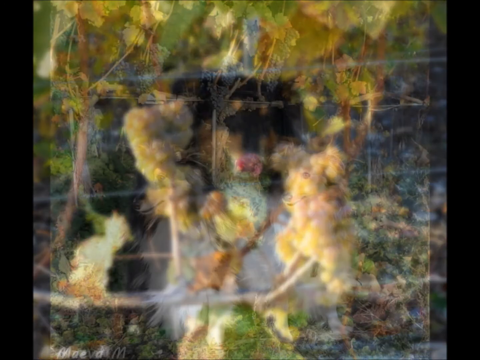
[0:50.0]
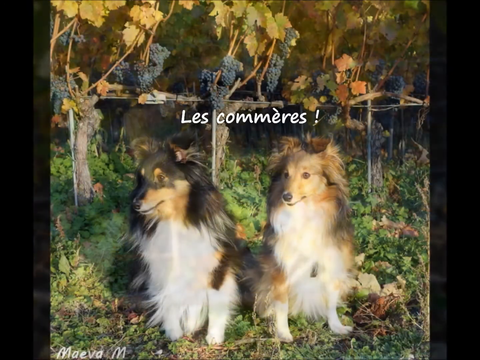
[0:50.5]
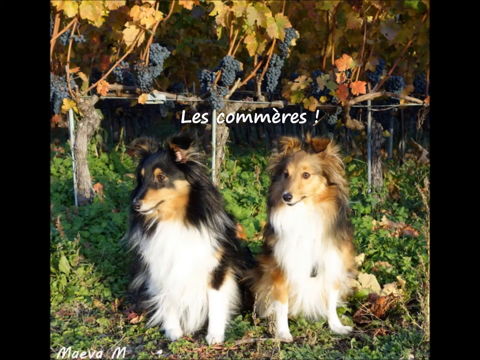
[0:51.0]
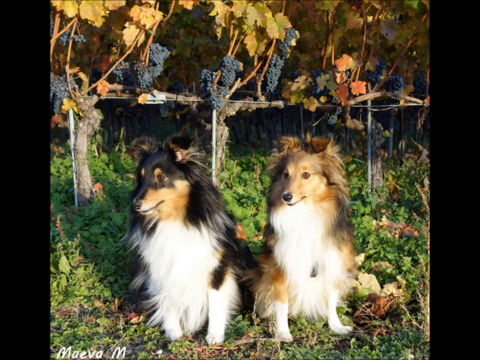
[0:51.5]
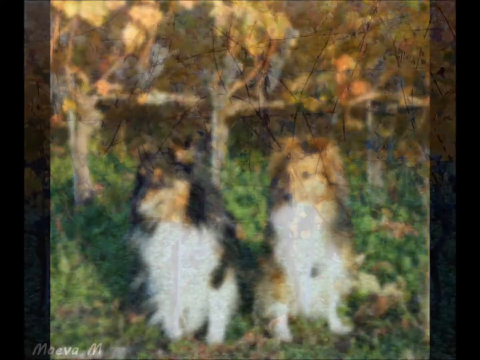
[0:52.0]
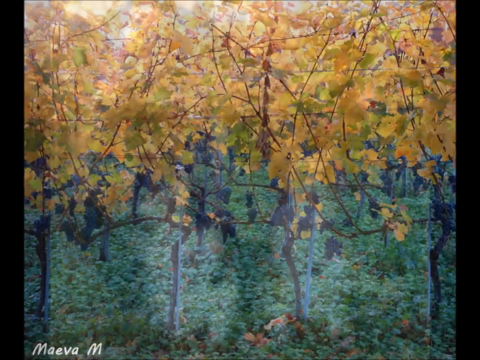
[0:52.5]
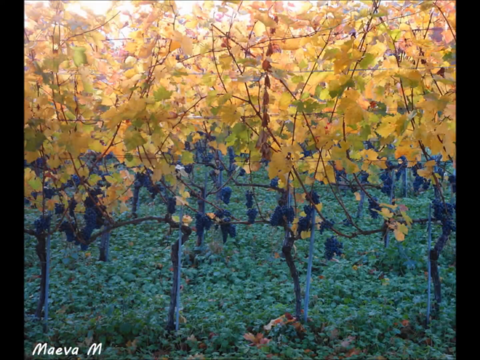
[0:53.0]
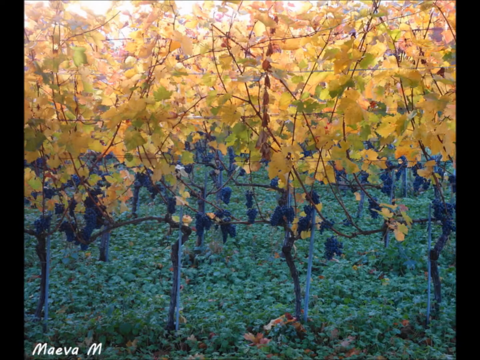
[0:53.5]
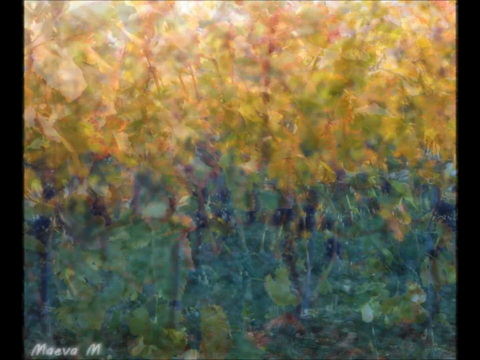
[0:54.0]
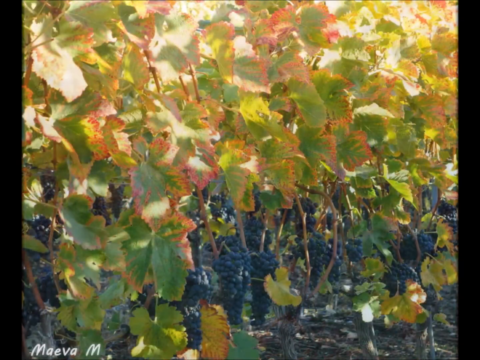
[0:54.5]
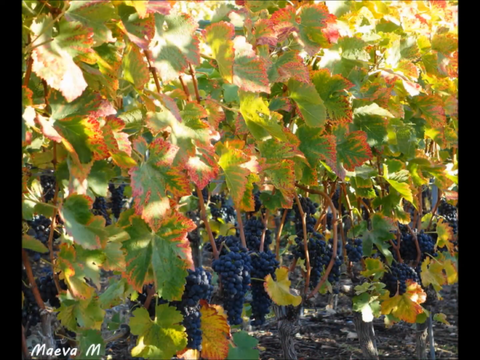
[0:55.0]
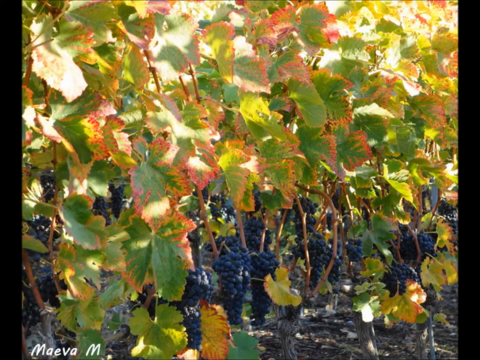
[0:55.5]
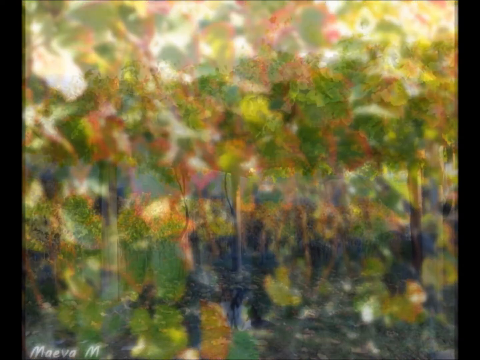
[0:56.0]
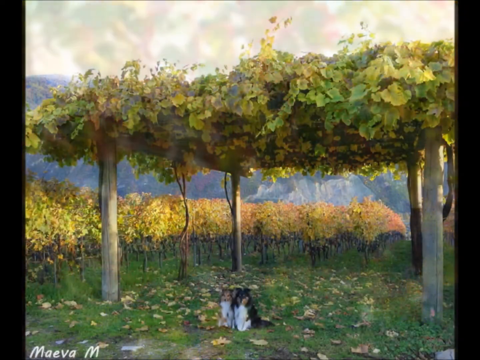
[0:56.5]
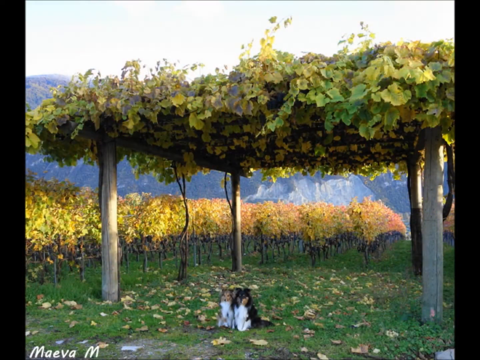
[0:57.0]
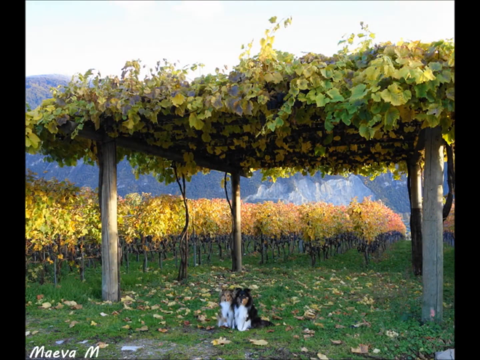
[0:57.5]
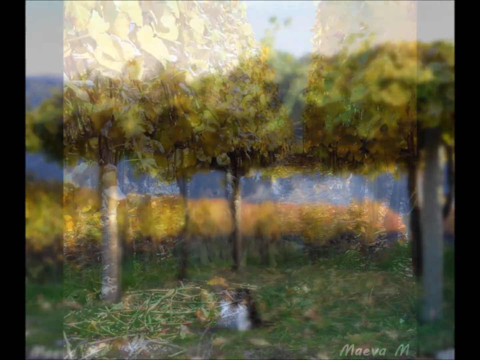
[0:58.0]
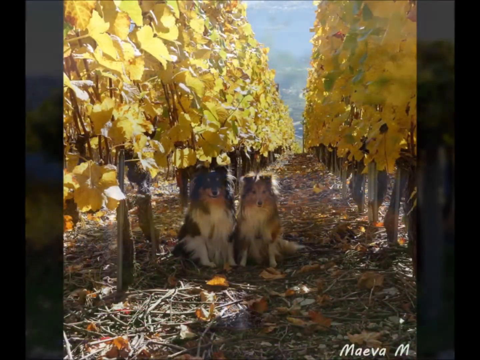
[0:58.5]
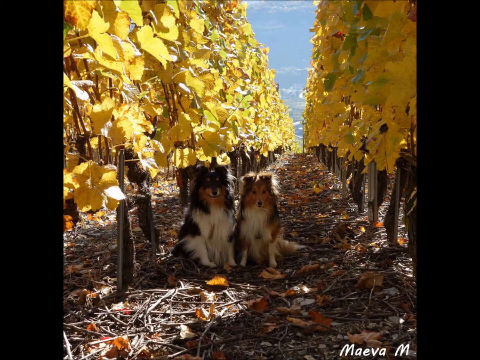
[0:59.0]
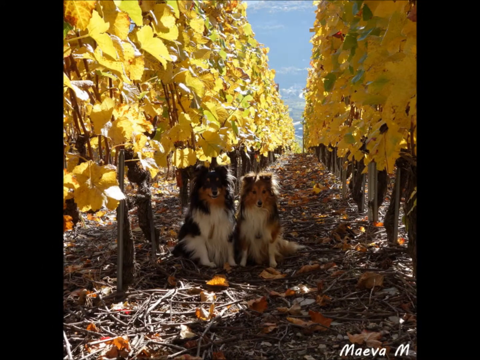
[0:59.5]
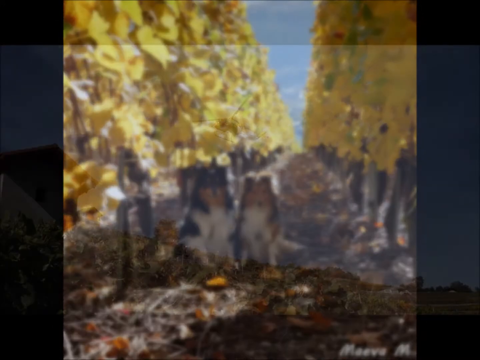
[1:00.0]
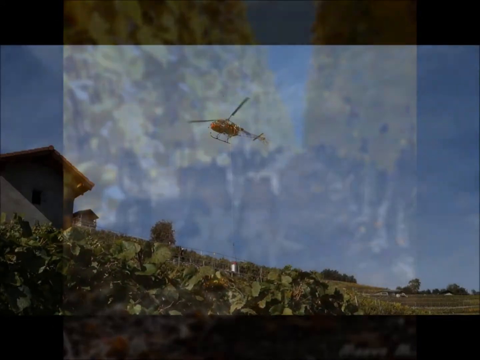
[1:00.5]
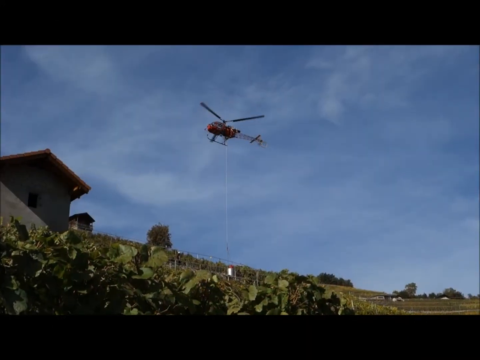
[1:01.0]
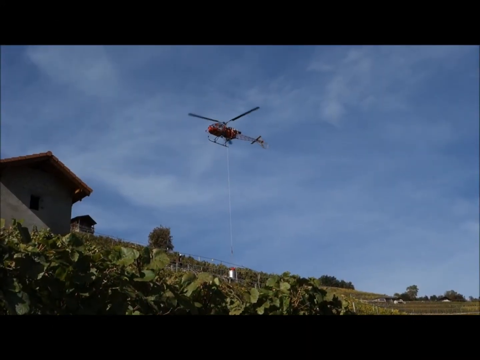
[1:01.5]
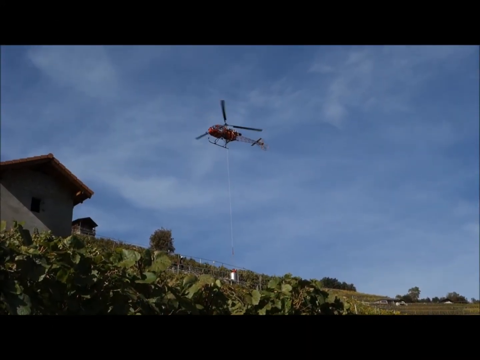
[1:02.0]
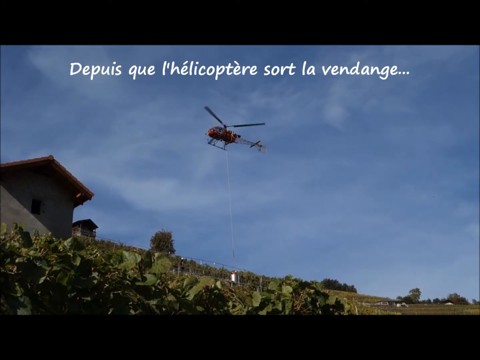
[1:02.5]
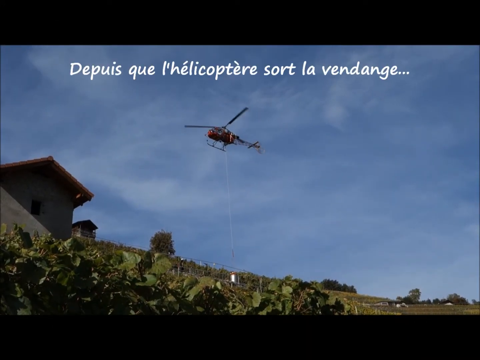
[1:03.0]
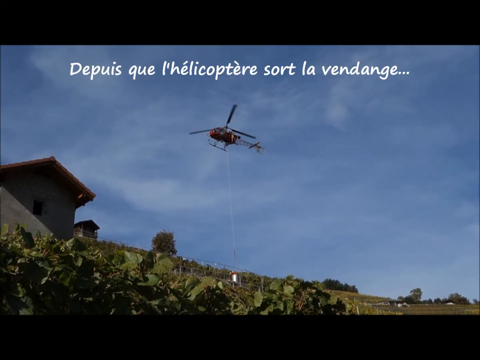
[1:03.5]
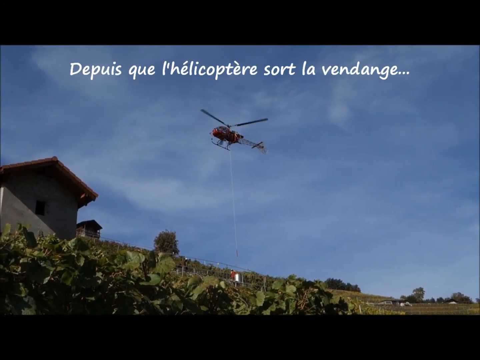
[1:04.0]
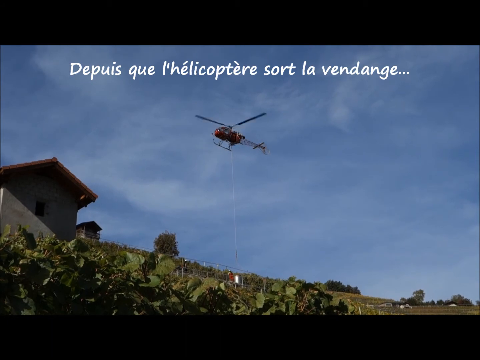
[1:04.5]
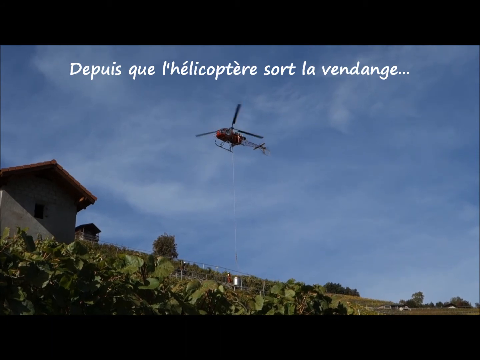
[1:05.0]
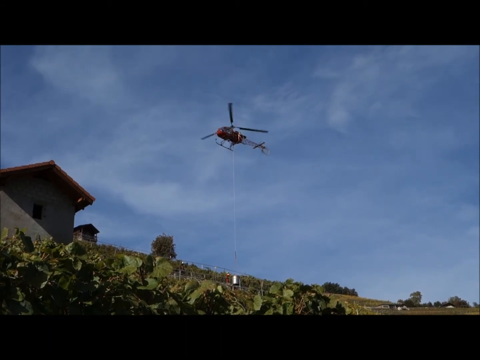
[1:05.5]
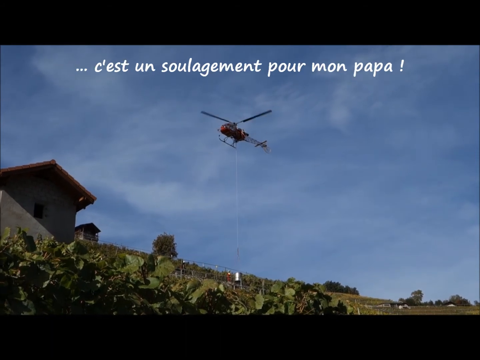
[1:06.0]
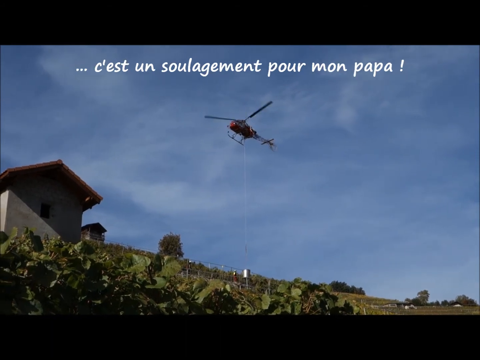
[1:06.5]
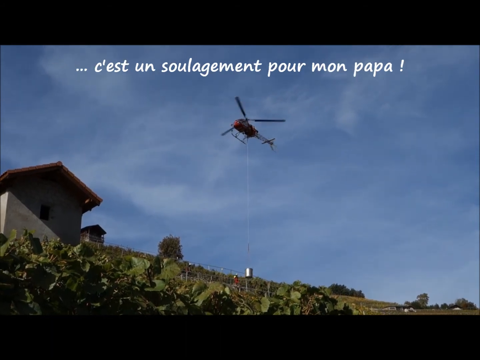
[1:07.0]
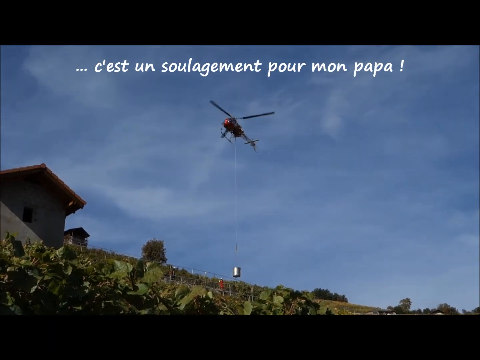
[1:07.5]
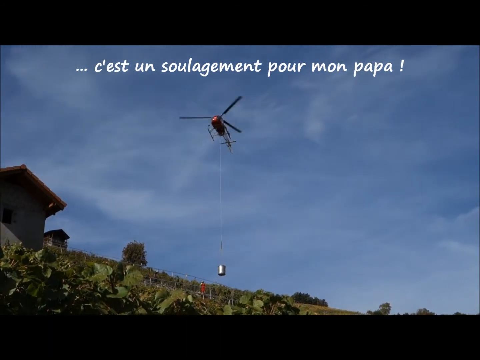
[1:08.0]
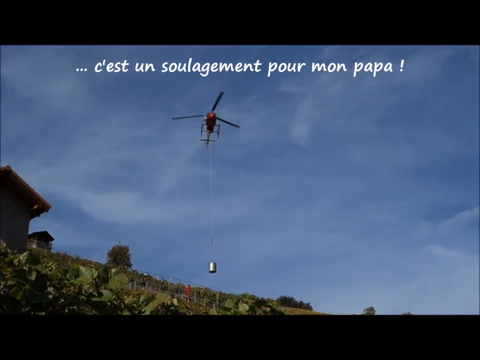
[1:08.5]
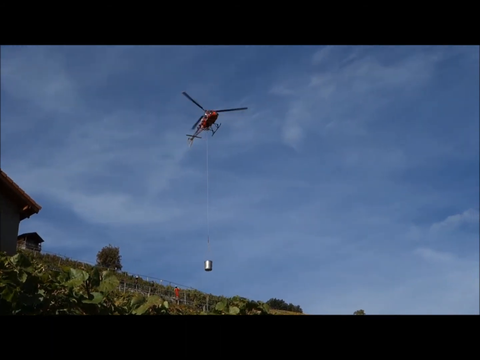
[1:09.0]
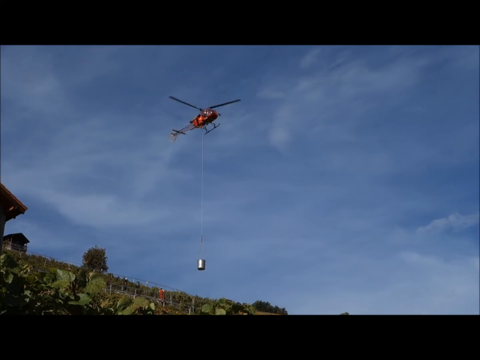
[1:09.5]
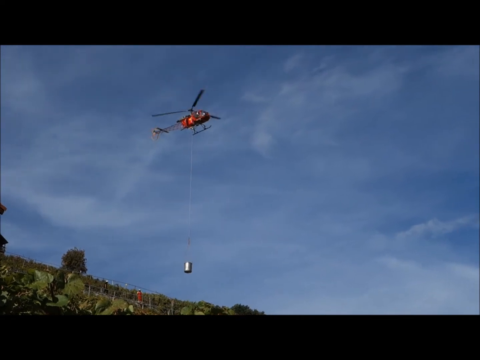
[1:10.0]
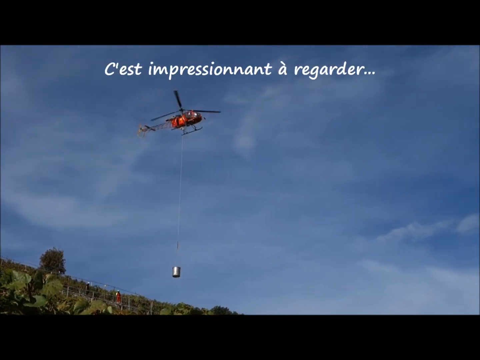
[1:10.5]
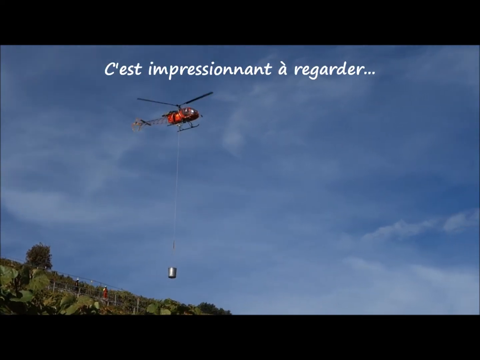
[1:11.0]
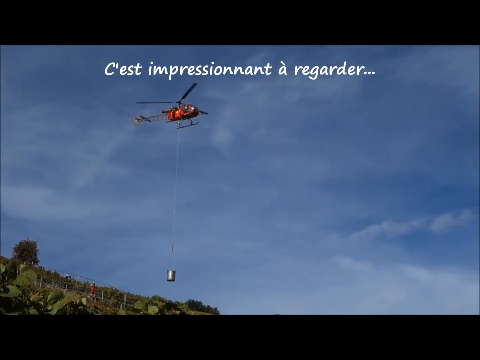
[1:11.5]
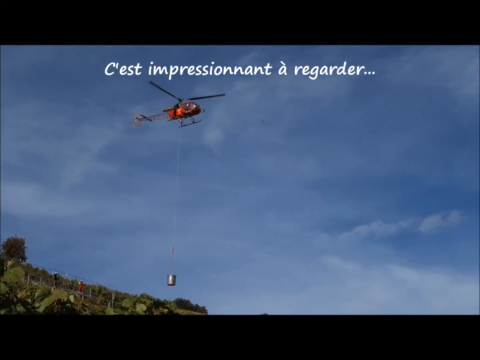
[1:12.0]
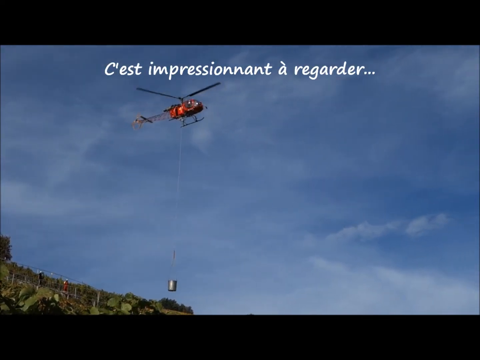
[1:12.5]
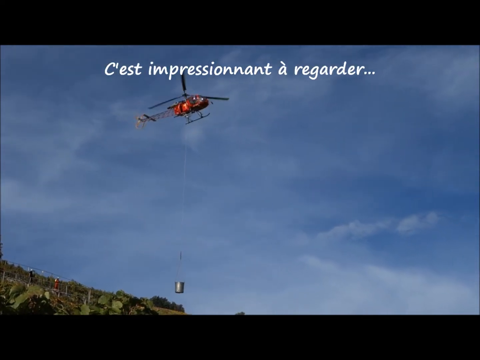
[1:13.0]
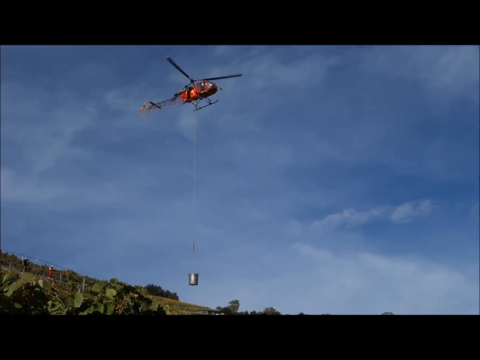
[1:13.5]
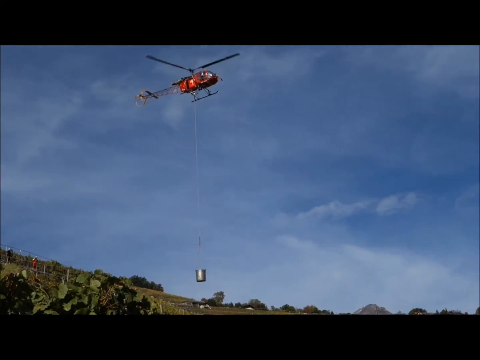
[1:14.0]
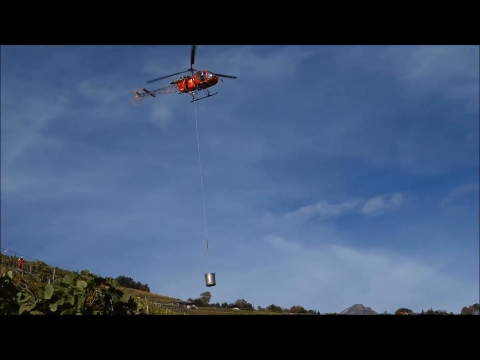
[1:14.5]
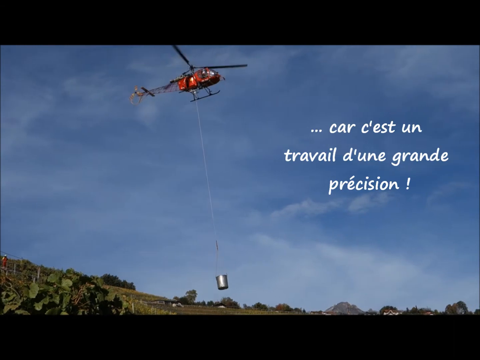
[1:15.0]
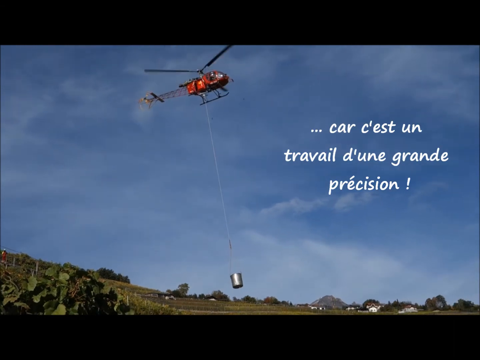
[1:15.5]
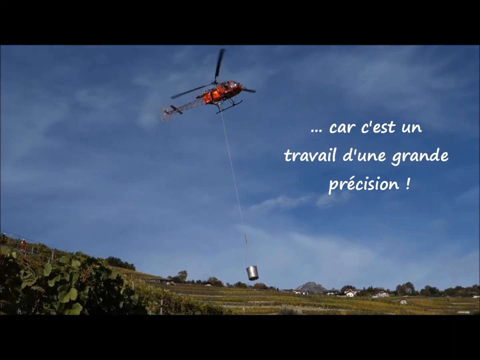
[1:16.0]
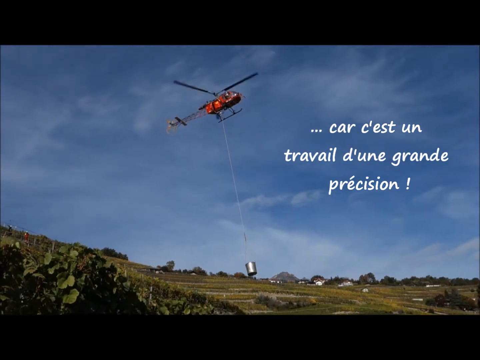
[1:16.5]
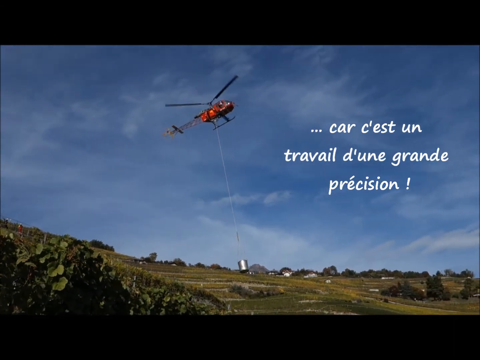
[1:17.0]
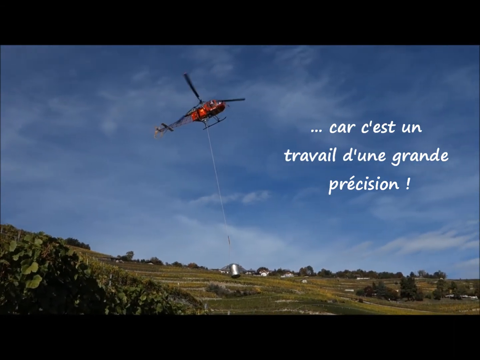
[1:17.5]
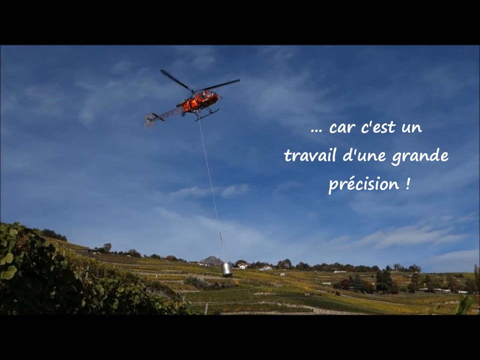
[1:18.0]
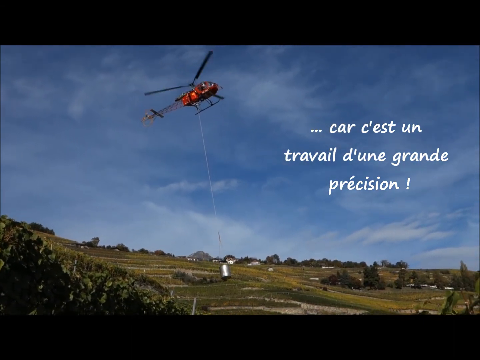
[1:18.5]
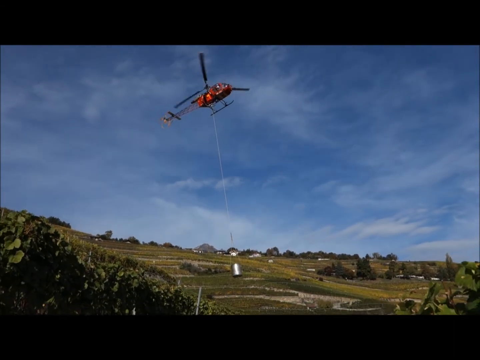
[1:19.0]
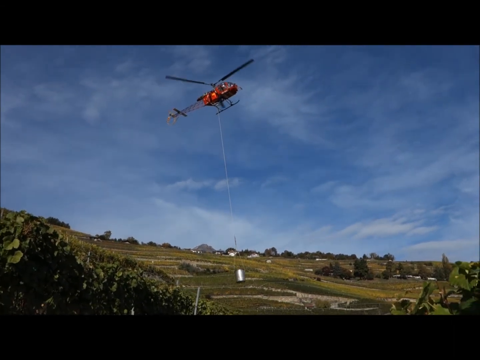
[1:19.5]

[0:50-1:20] The picture of the dog eating grapes fades away, replaced by another picture of the two collies sitting next to each other in a vineyard. One is darker, with black, and the other is lighter and more beige; both have very long, soft-looking fur and long, narrow snouts. More pictures of the vineyard follow, with very orange leaves, and then leaves that appear to be in the vineyard, green rimmed with pink. Another picture shows what looks to be the edge of the vineyard with a large shade structure, sort of a gazebo, made of natural materials, with leaves and ivy on top and four wooden posts on the side. Another picture shows the two dogs sitting next to each other in the middle of a vineyard row, with light shining behind them putting them in shadow. A helicopter then appears in the sky over the vineyard, with more French text.